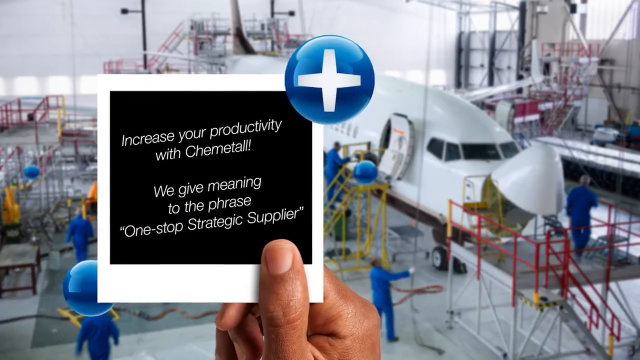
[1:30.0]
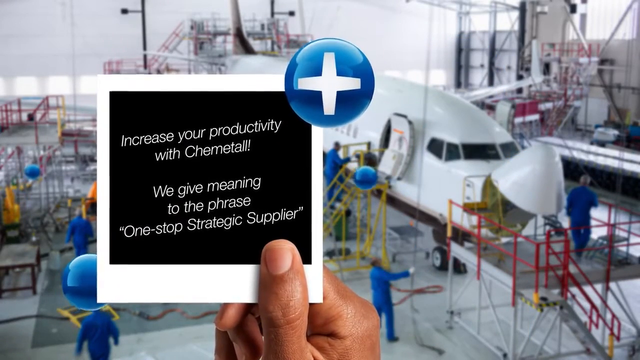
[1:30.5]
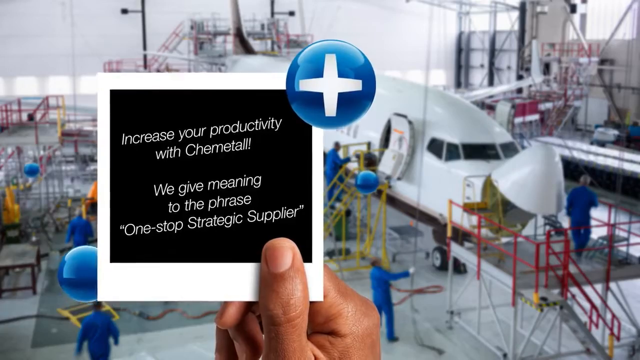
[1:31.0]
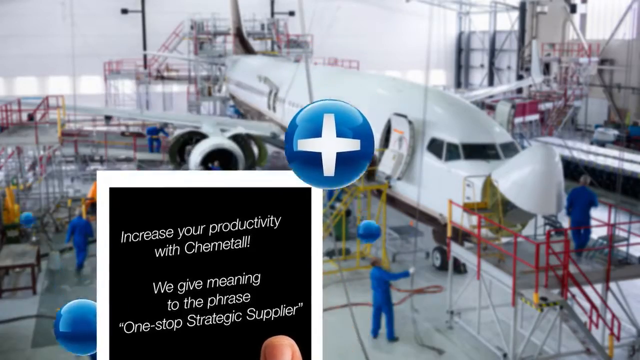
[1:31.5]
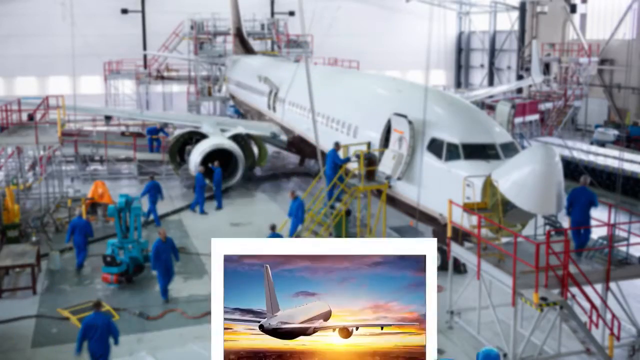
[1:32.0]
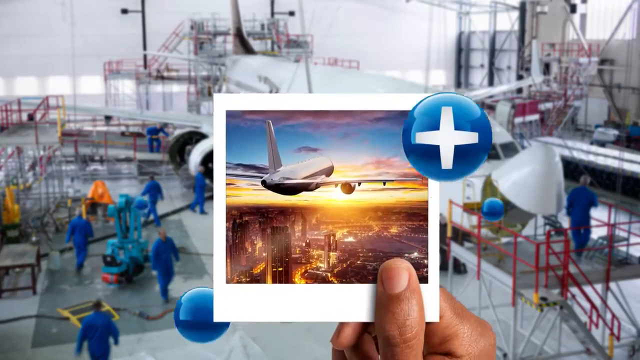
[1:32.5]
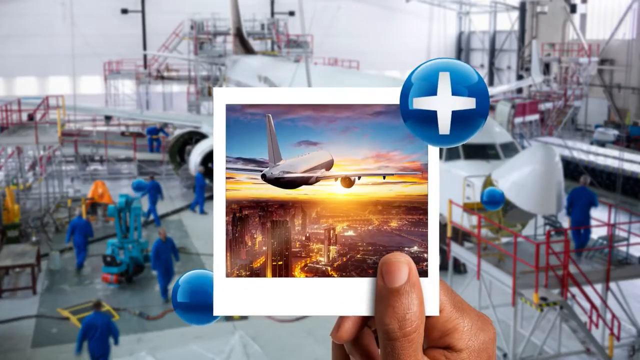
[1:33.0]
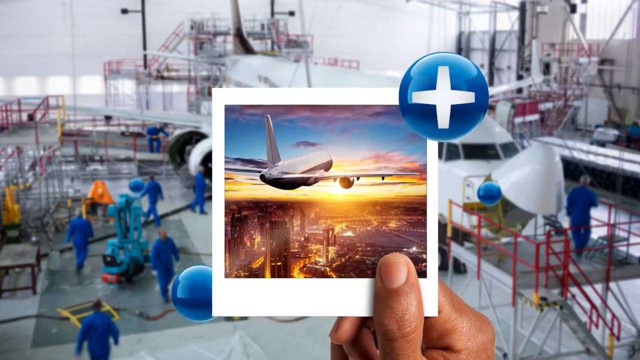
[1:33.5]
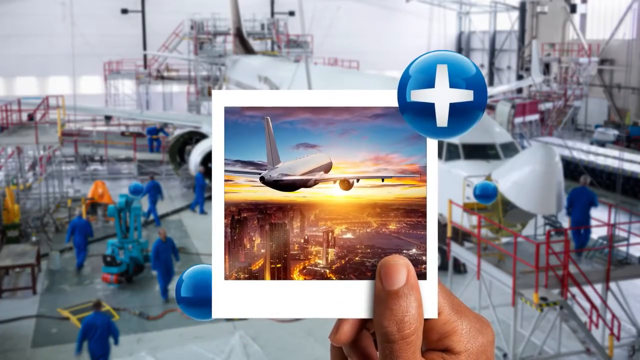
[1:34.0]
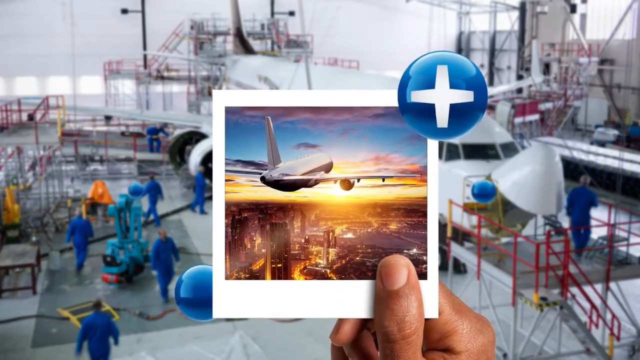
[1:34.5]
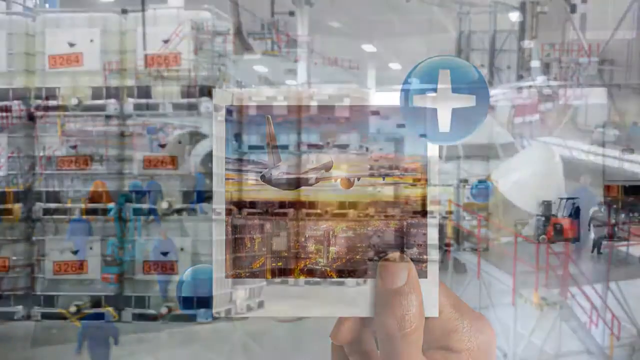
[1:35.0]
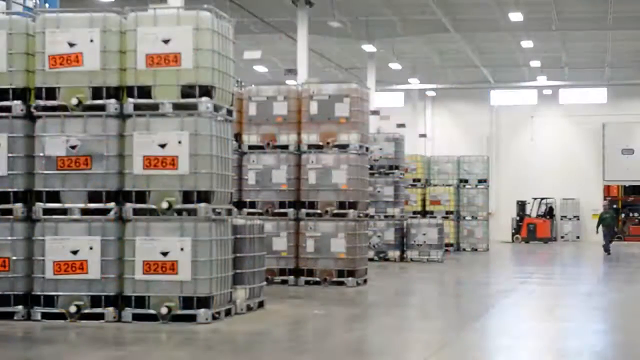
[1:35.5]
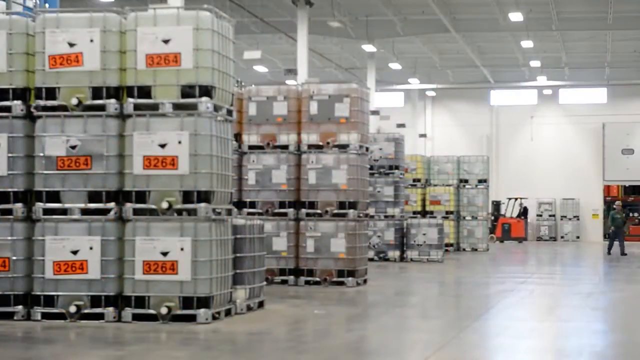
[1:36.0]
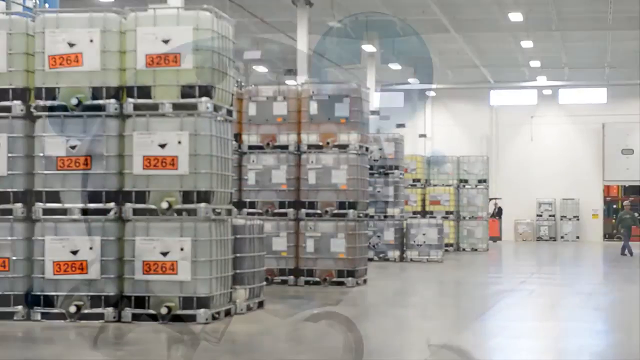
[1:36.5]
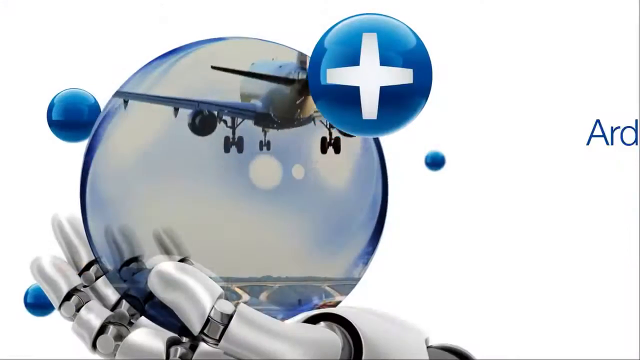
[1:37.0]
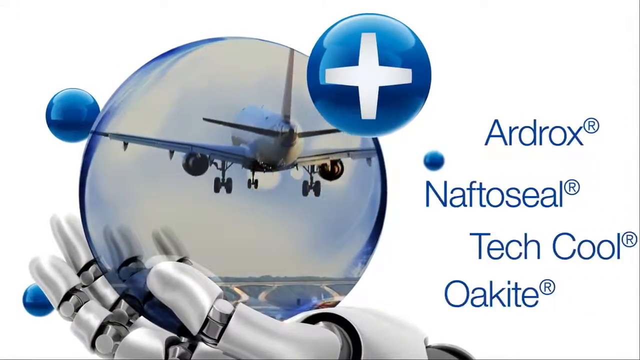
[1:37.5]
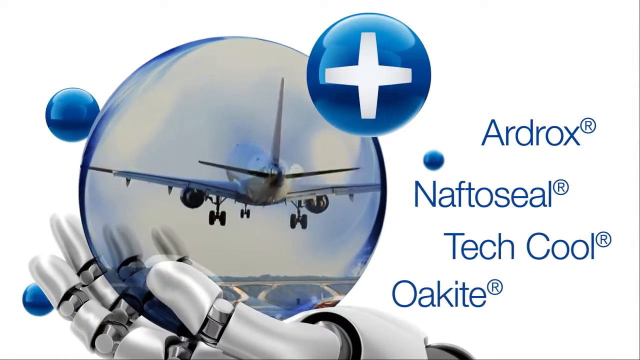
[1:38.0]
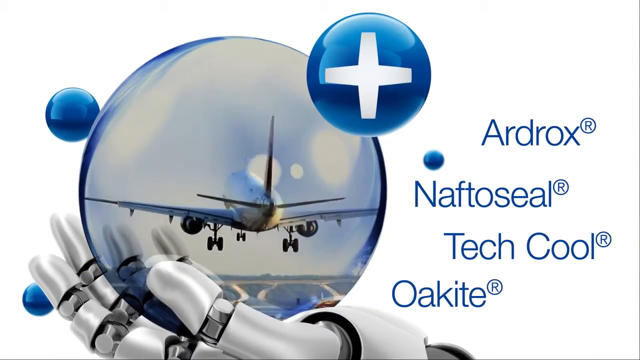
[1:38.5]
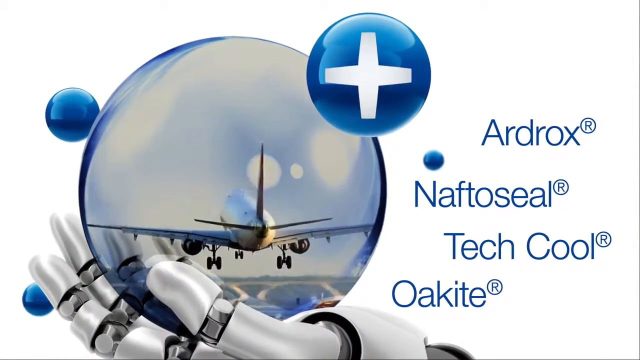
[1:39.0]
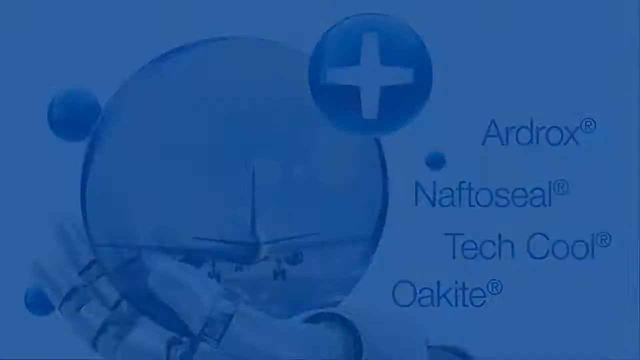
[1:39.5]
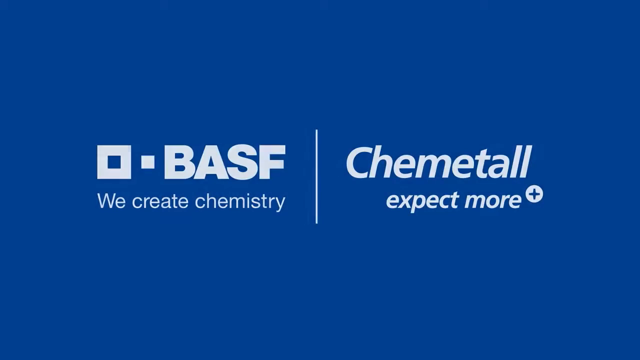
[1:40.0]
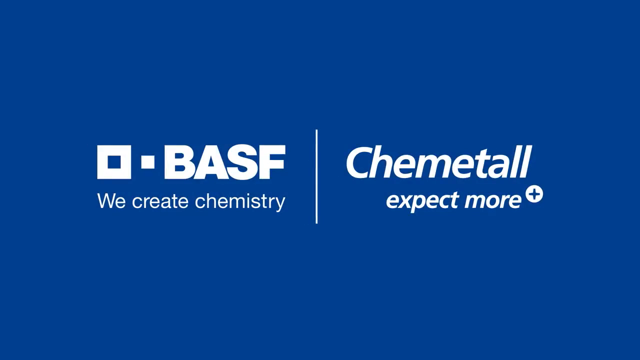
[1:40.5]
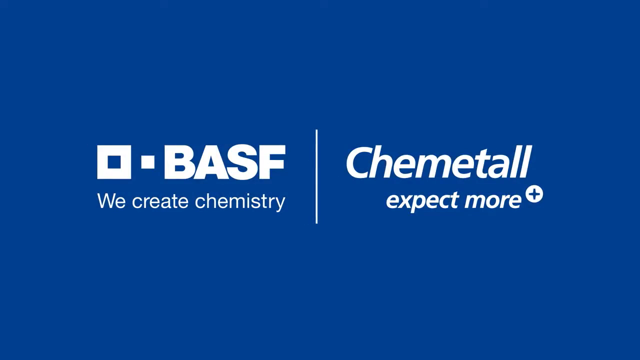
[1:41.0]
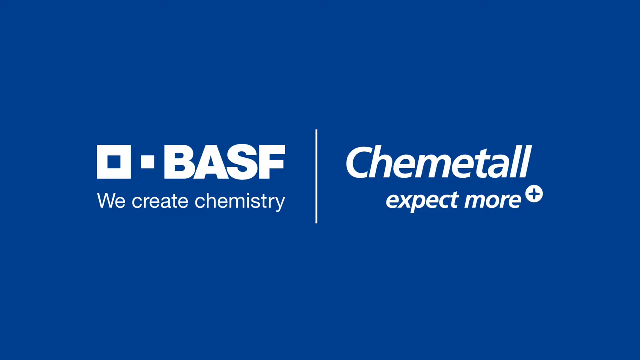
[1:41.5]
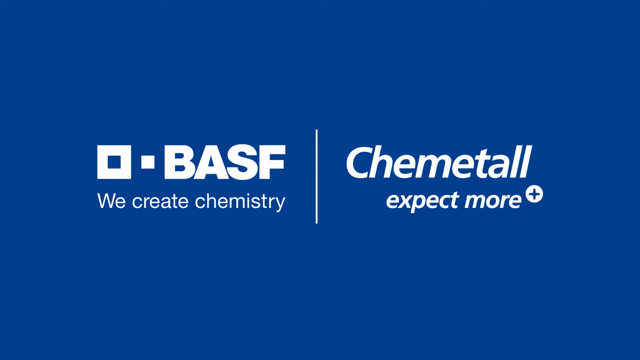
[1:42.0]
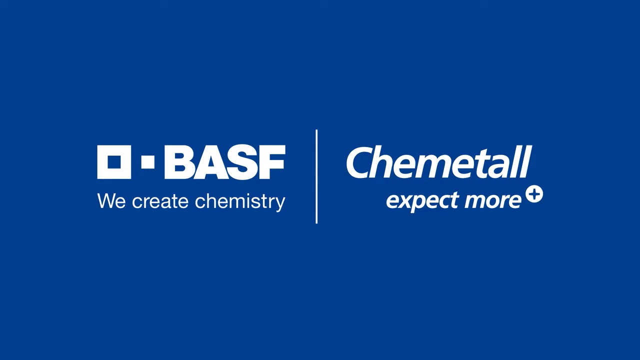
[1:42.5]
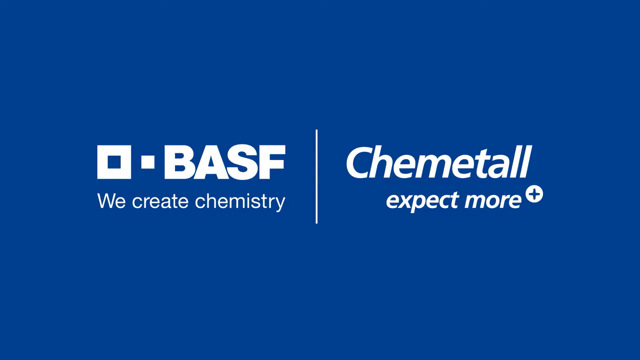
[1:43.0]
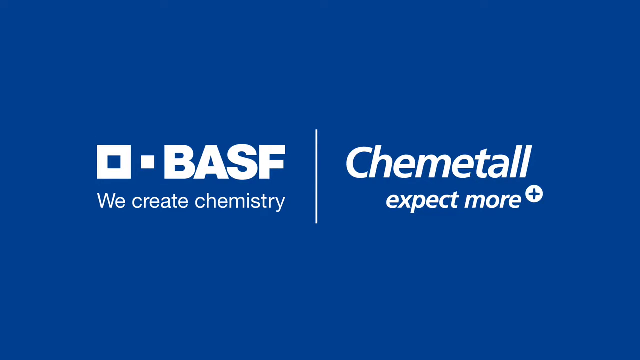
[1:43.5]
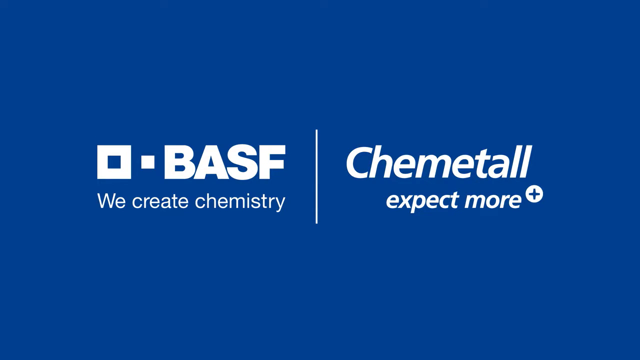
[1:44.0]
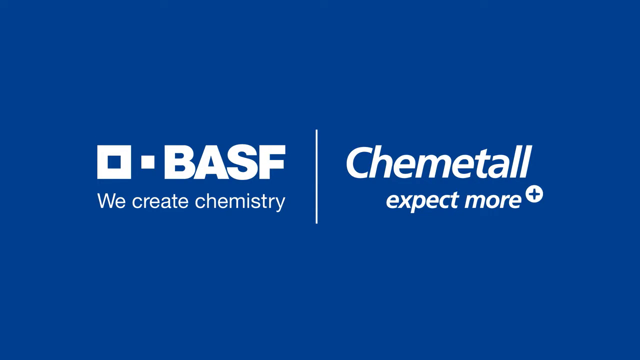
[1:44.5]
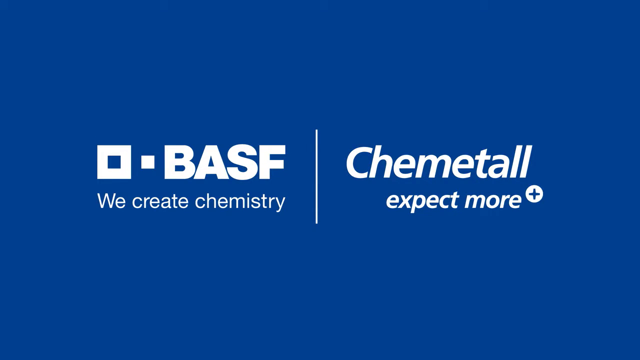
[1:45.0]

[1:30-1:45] In the upper right corner of the photo is a 3D circle with a white plus sign inside it, and in the background an airplane hangar shows a bunch of people working on a large white airplane. That hand goes down, and another hand comes up with another photograph, a 2D or 3D drawing or computer image of an airplane flying over a city with a sunset in the background and some blue balls kind of floating around. The scene then changes to a factory, where a little tractor or some kind of automotive device drives in the backdrop, someone in a hard hat and a blue outfit walks, and lots of cartons are everywhere on the left side of the image. Then a giant metallic ball appears on a white background, with a plane landing on a tarmac inside it; the ball is held up by a 3D robotic hand. In the upper right corner is a blue circle with a plus sign, with another blue circle to its left, and text appears on the right side reading "Ardrox, Naftoseal, Tektool, and Okite," all trademarked. Finally, a blue screen says "BASF, we create chemistry," with a line and "Chemetall, expect more," and the video stays there for a while before ending.